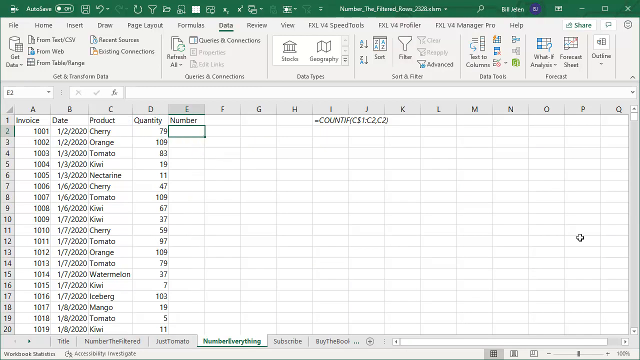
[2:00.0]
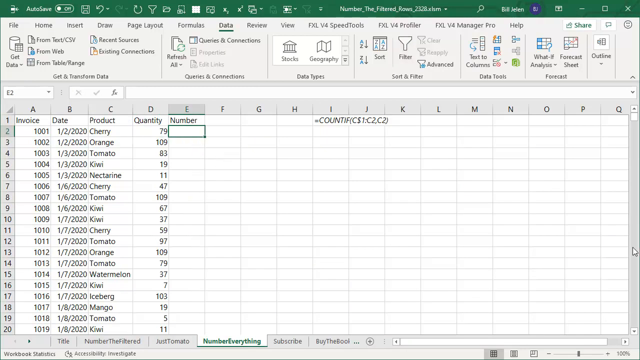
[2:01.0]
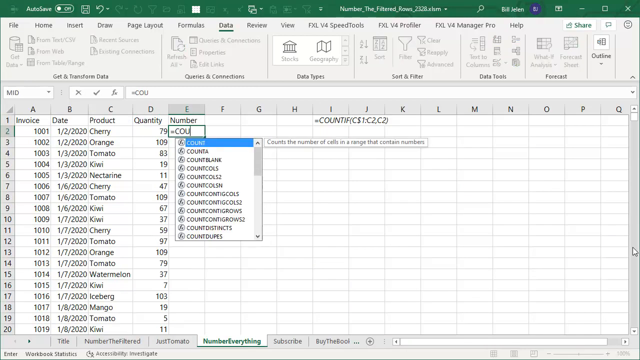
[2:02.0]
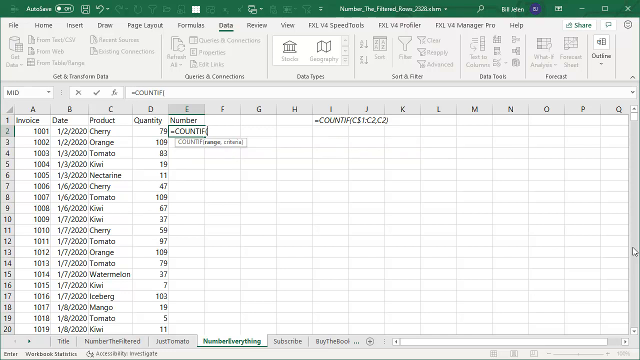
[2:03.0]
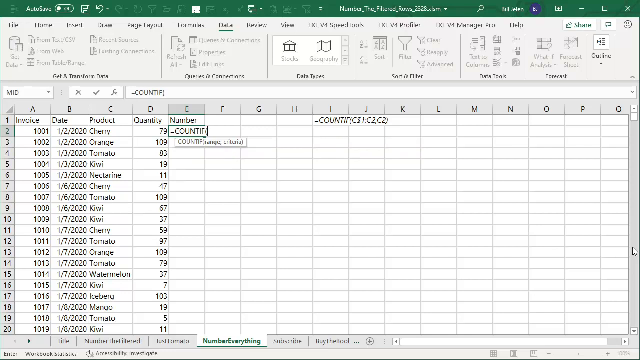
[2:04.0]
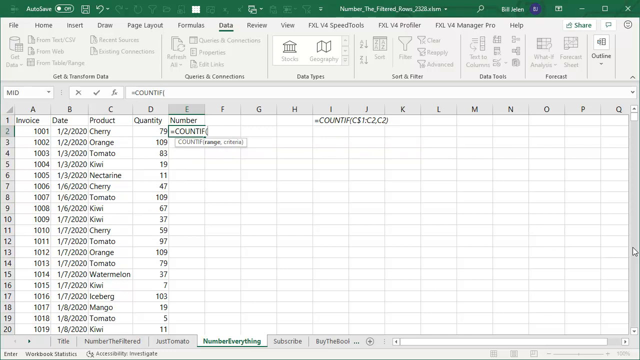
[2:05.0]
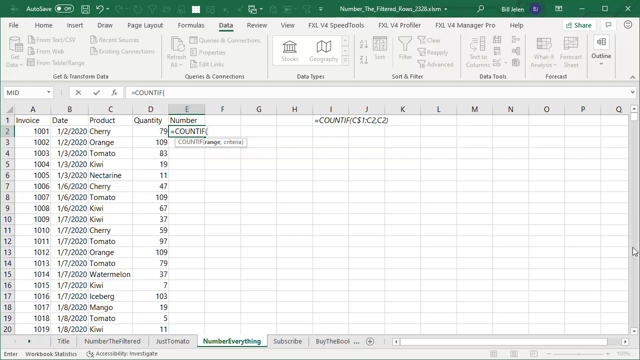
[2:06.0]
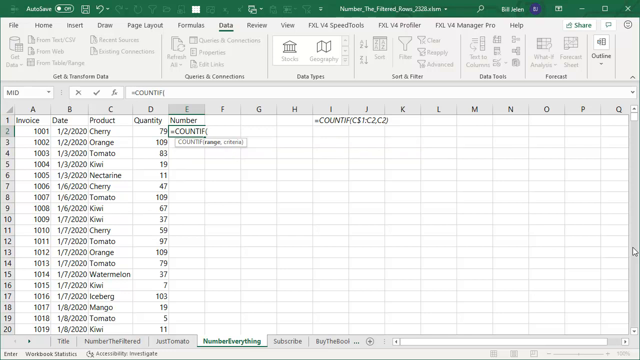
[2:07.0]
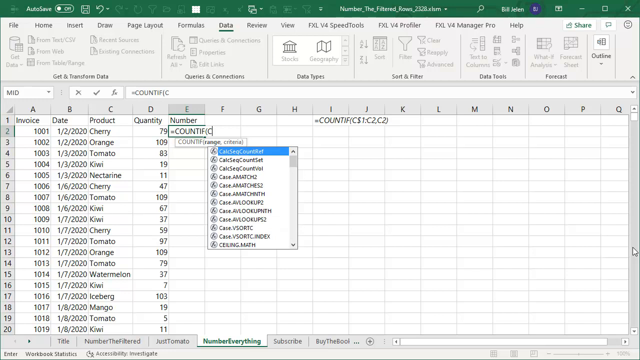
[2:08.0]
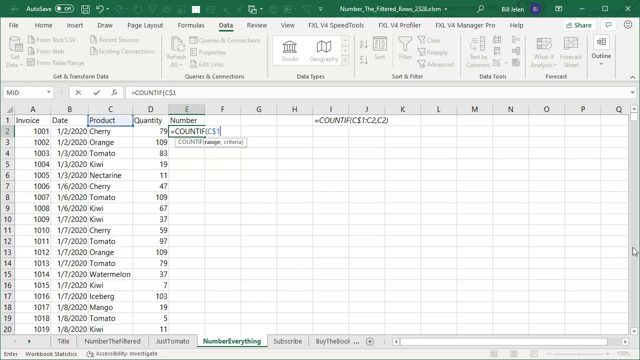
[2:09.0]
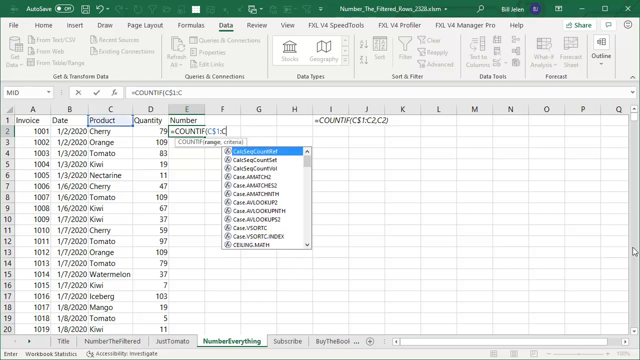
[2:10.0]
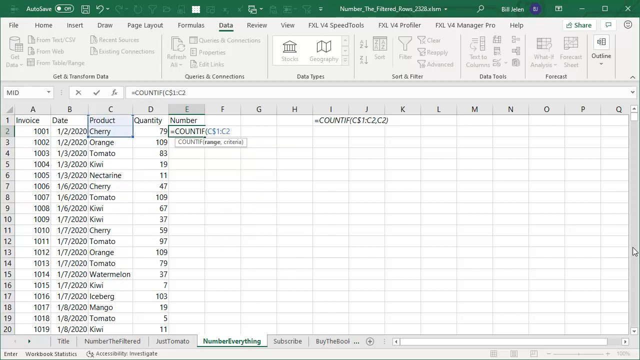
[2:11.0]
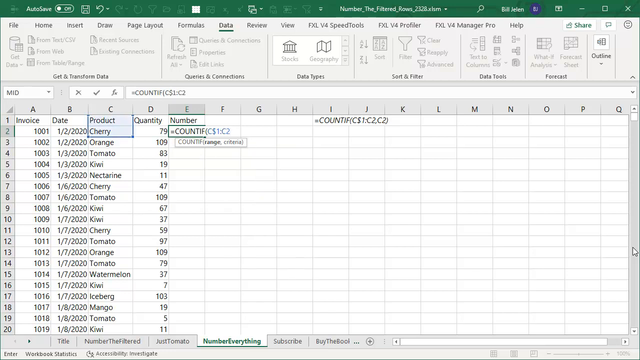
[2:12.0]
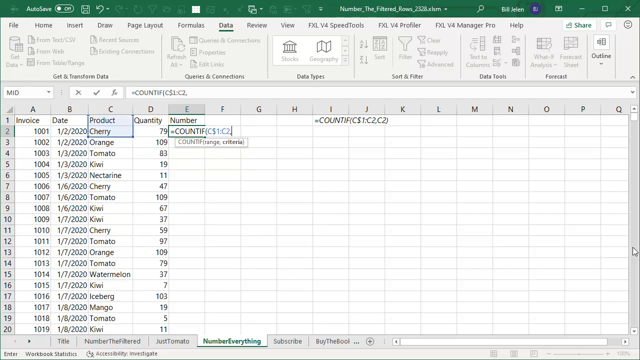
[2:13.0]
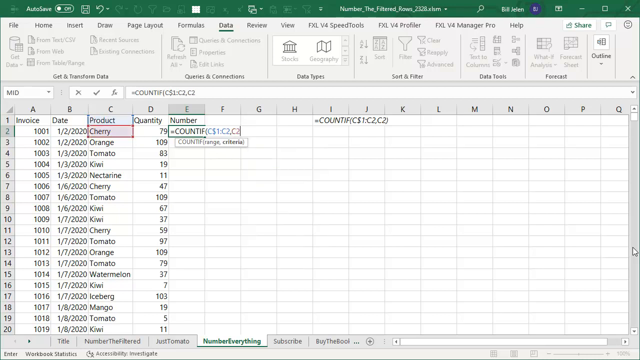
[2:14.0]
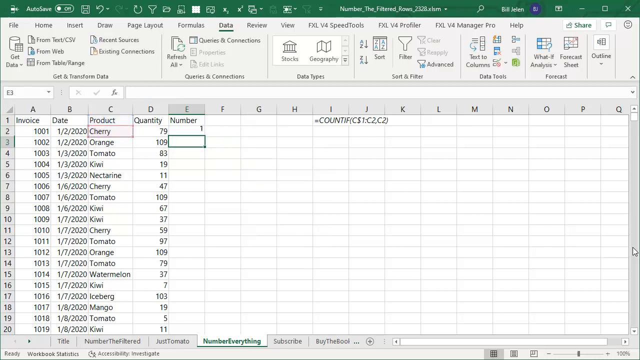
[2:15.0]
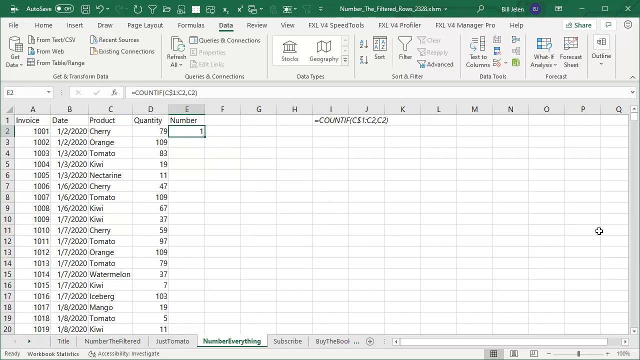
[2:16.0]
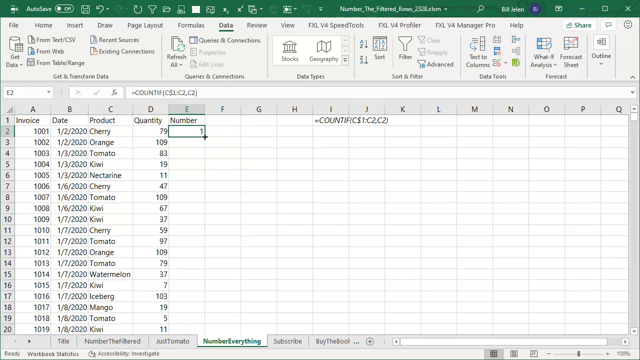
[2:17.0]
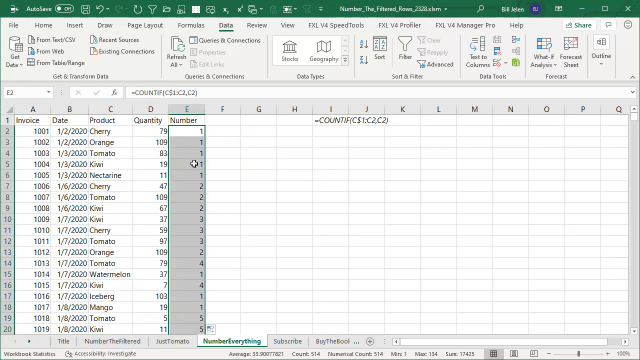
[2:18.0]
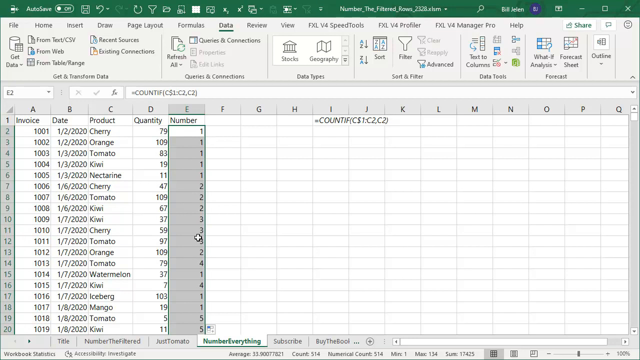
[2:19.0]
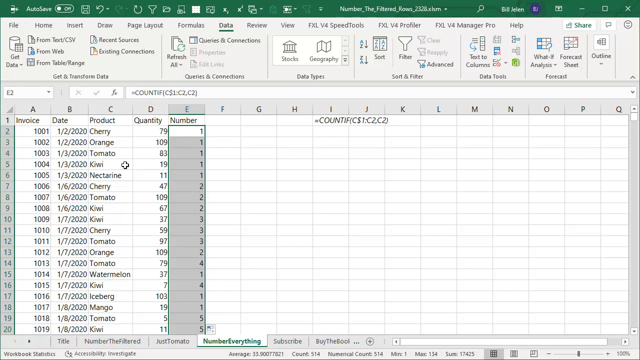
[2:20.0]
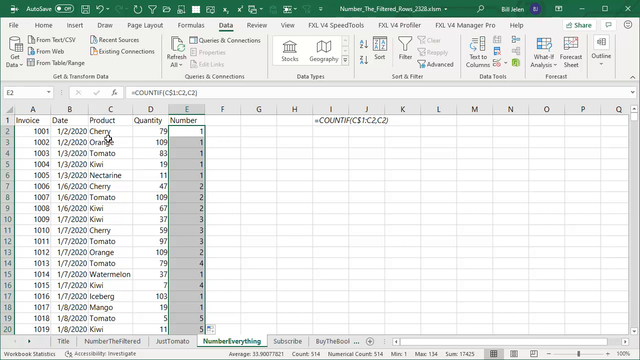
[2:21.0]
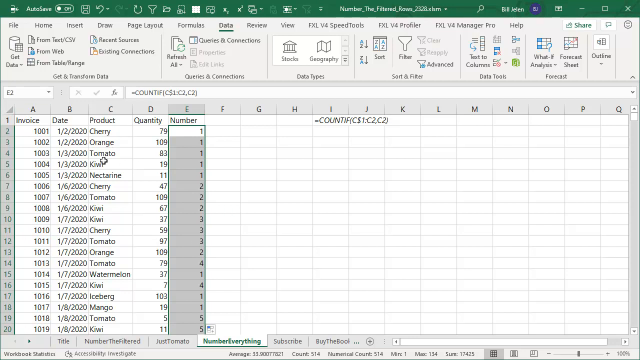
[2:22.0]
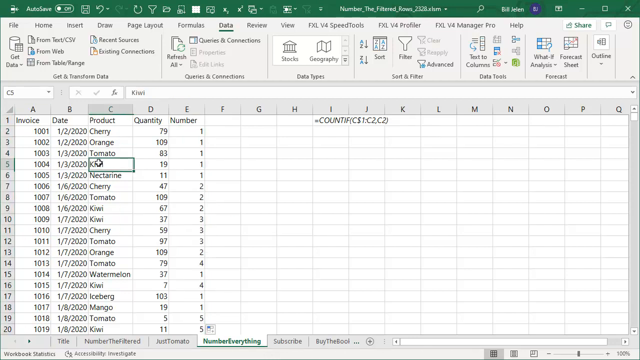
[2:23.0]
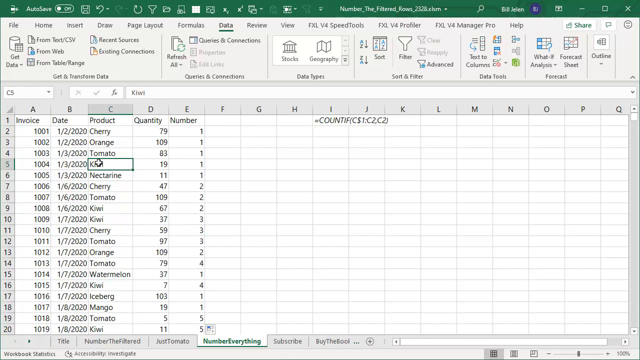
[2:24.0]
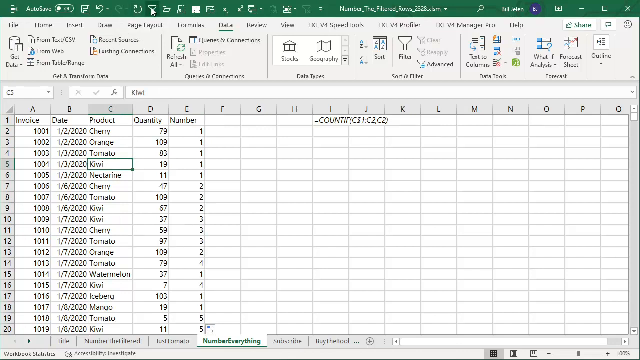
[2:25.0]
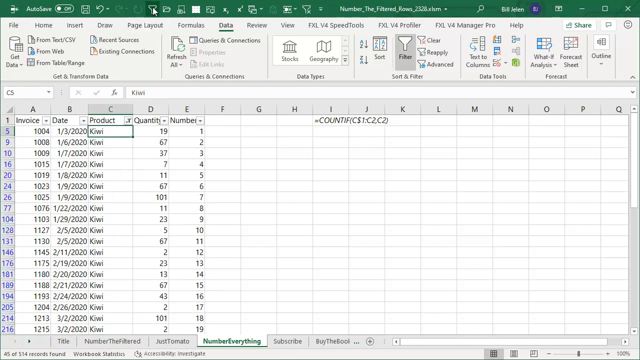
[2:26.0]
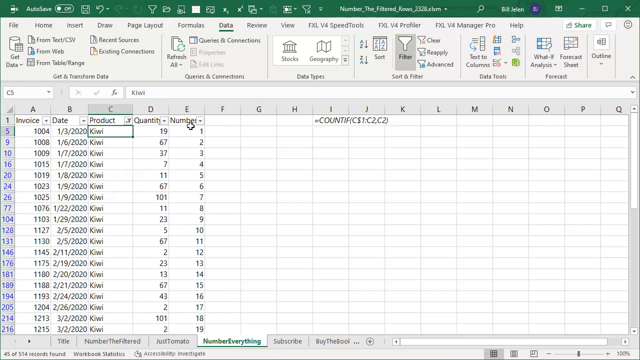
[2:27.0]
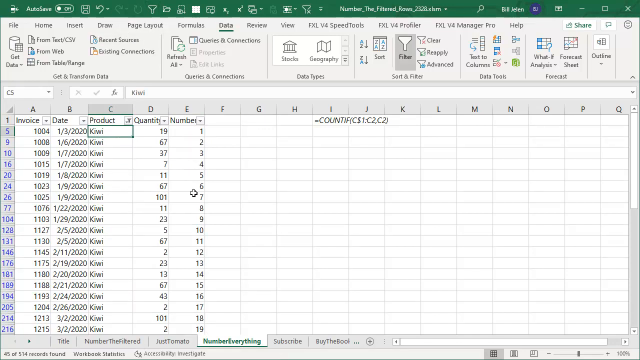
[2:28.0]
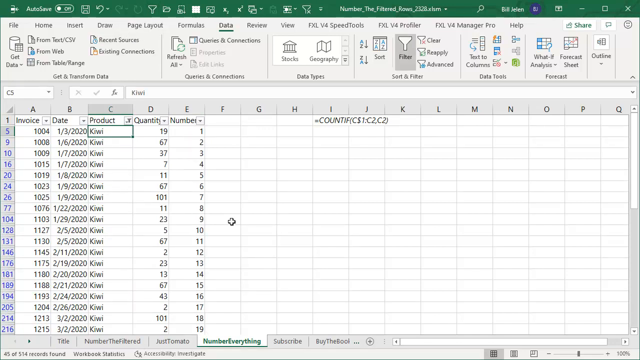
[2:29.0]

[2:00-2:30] He starts typing "=countif(" in E2, with the blinking cursor showing, then types C and a dollar sign, and a drop-down box appears. As C2 is typed, the cherry in C2 is briefly highlighted in red. He apparently copies and pastes, and suddenly all the previously blank cells in the E column have numbers: it starts with 1, 1, 1 for several, then some 2s and 3s. He moves the plus cursor down one by one, apparently looking at the different products, then clicks Kiwi in C5 and goes up to the green border at the very top where the filter button is. He clicks it again and moves his cursor down to the numbers in the E column. The only formula is over the first two cells of I and J, reading "equals count if" followed by references to C1 and C2. The visible invoices run from 1001 through 1019 across A1 through A20, the dates are mostly 1/2, 1/3 and 1/6, and the products are all fruit except iceberg and tomato.